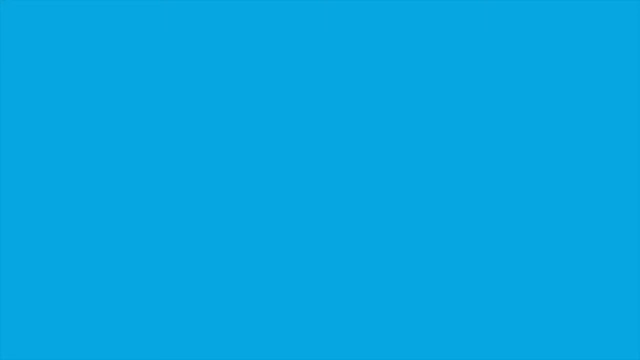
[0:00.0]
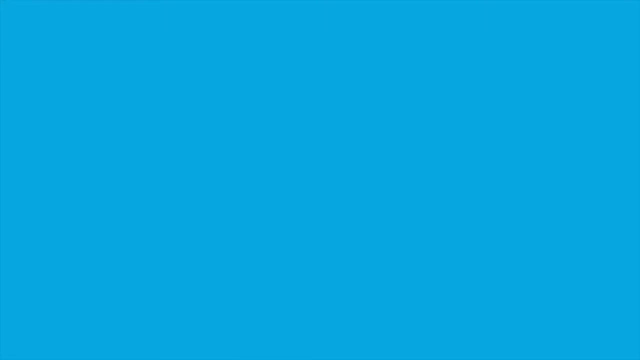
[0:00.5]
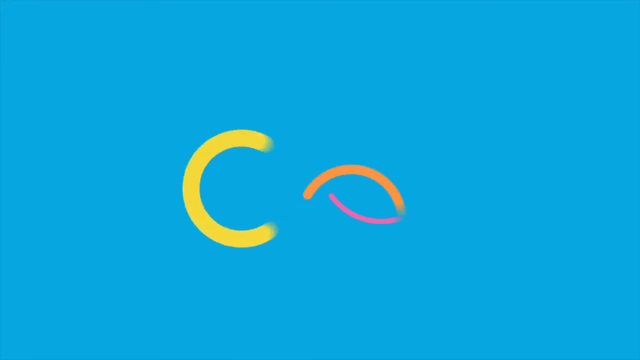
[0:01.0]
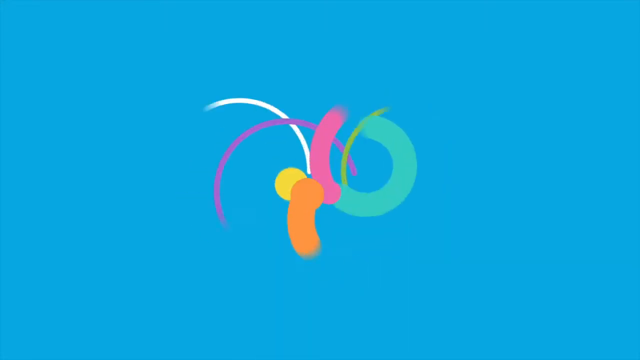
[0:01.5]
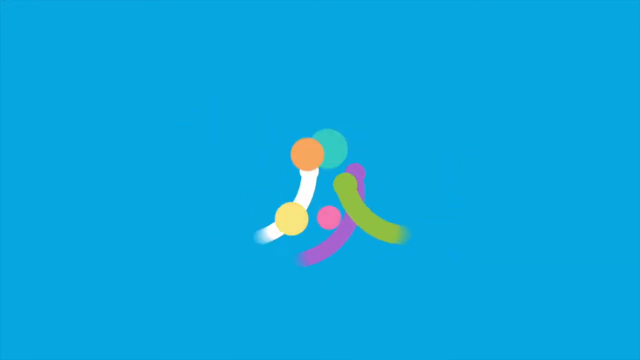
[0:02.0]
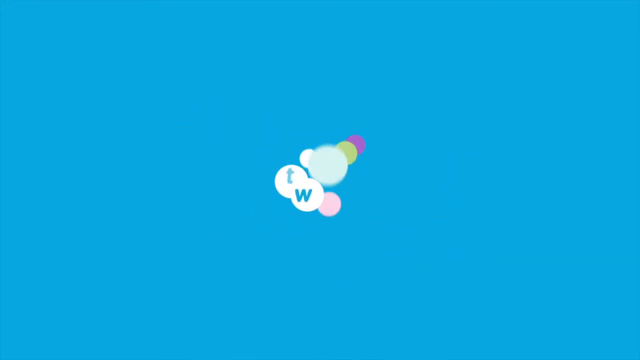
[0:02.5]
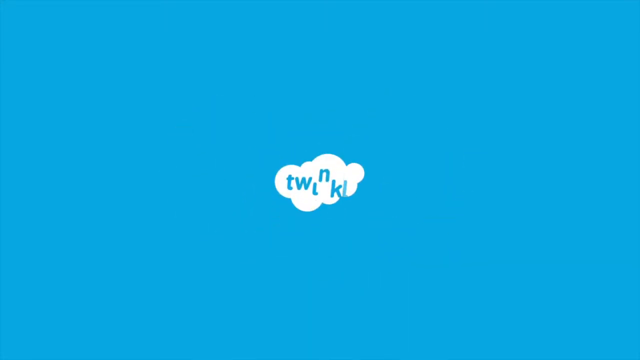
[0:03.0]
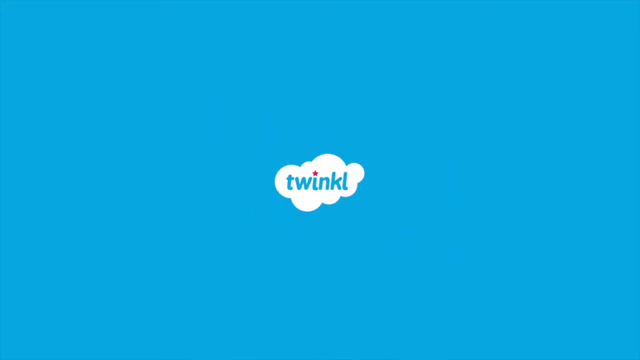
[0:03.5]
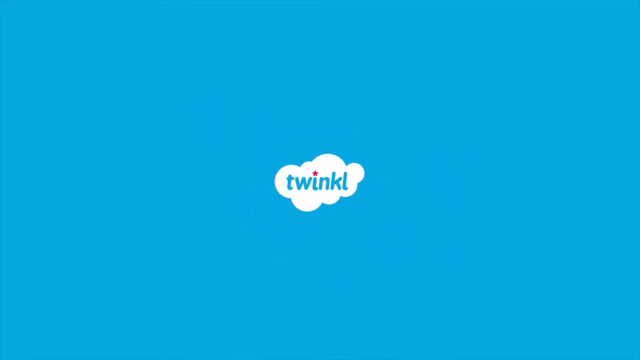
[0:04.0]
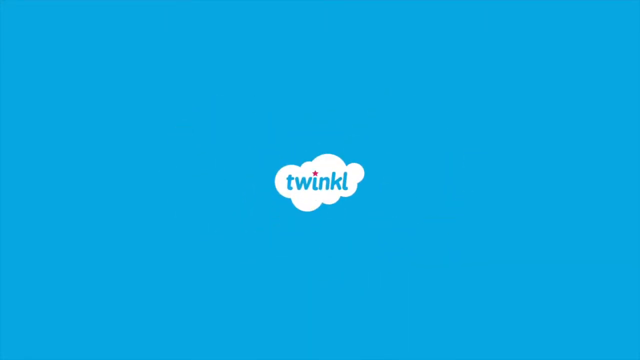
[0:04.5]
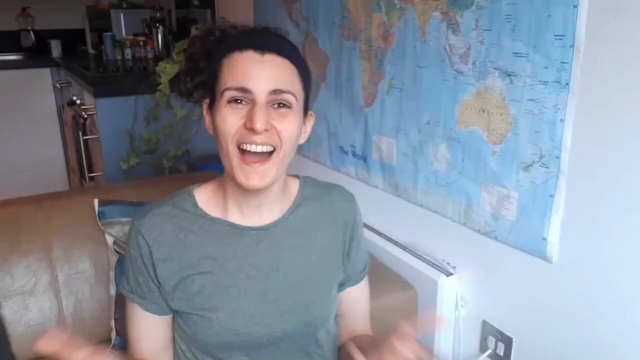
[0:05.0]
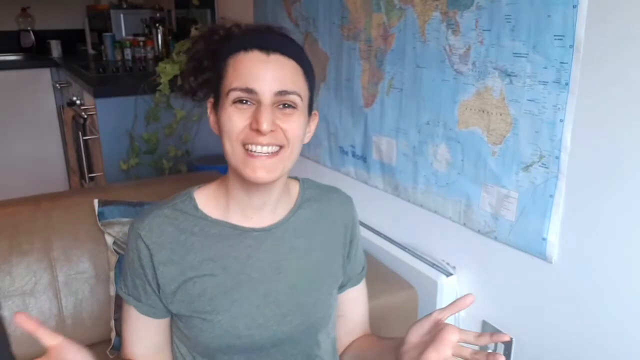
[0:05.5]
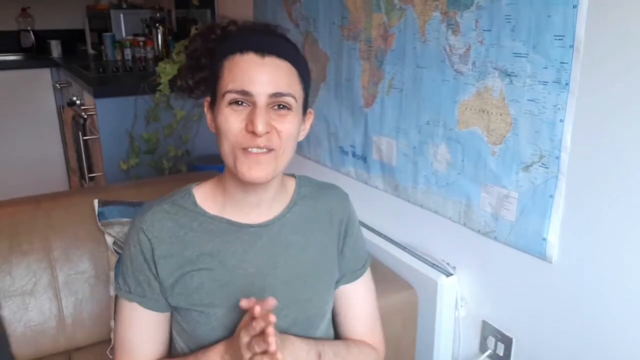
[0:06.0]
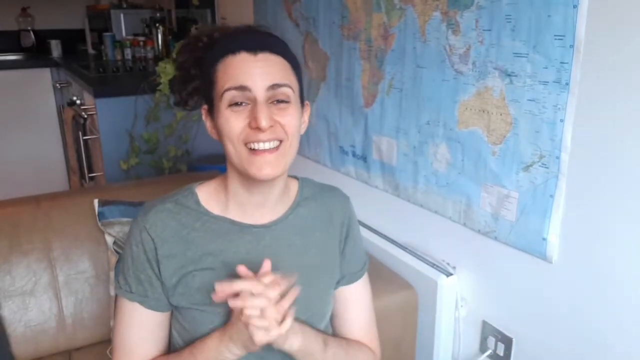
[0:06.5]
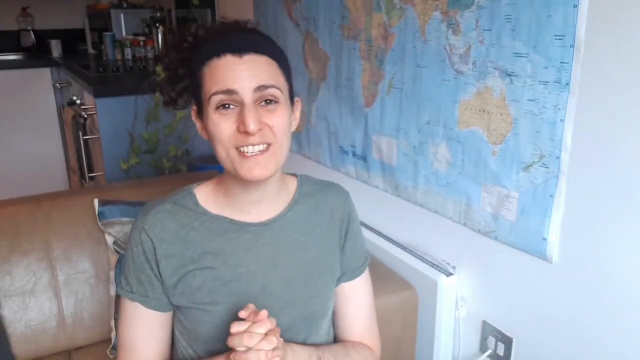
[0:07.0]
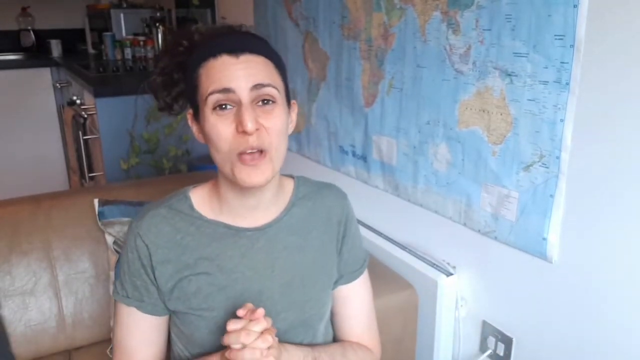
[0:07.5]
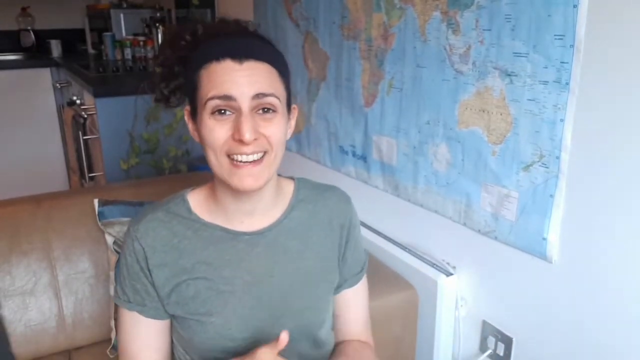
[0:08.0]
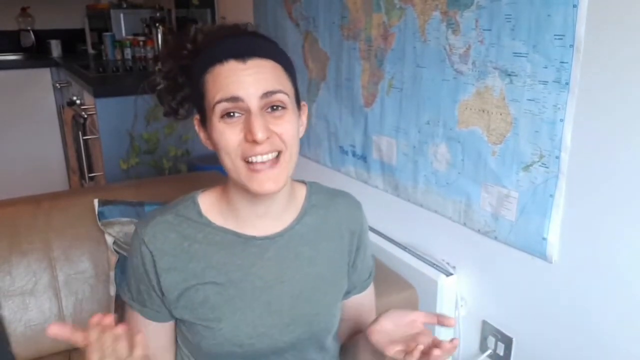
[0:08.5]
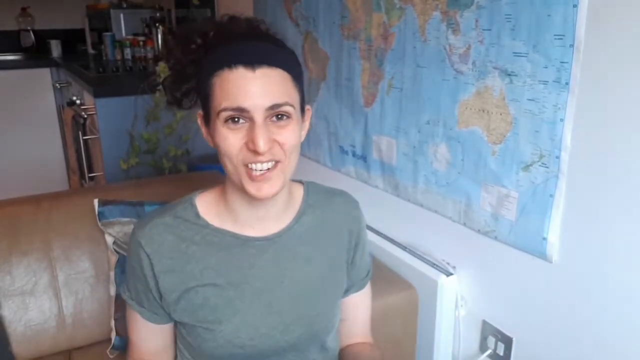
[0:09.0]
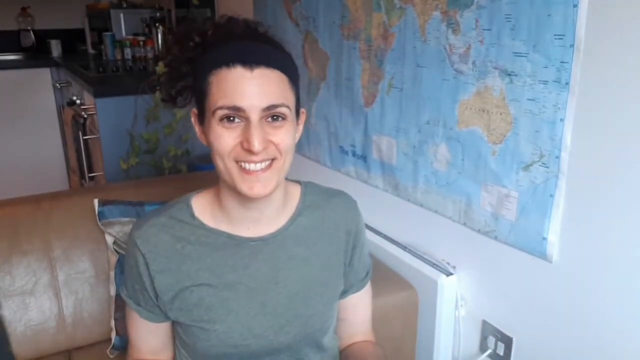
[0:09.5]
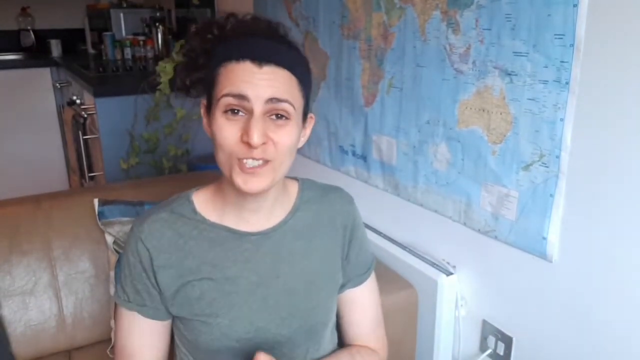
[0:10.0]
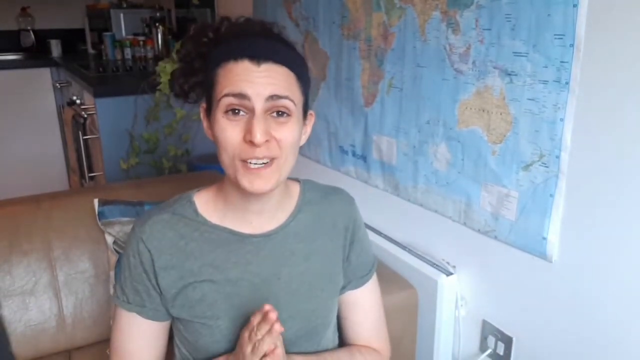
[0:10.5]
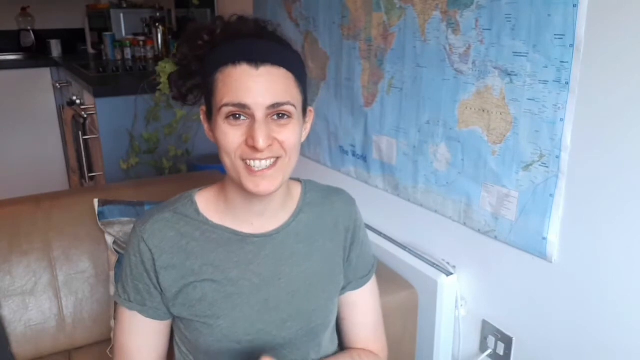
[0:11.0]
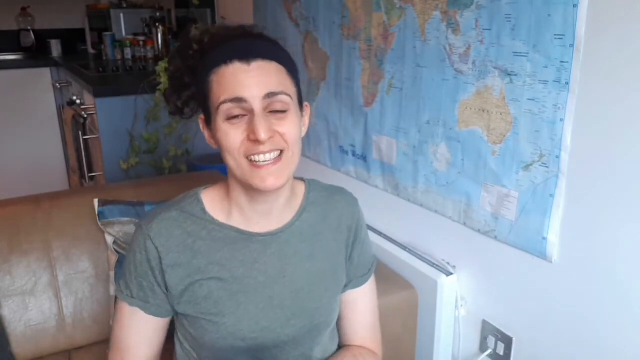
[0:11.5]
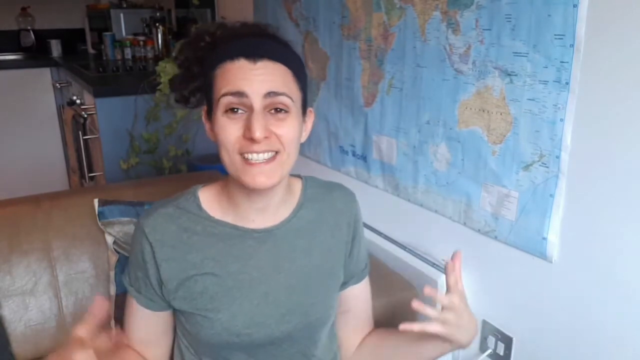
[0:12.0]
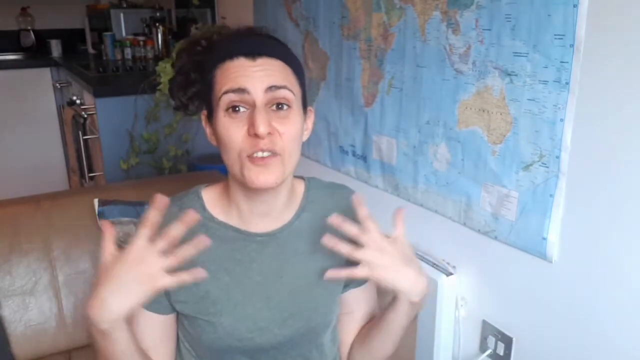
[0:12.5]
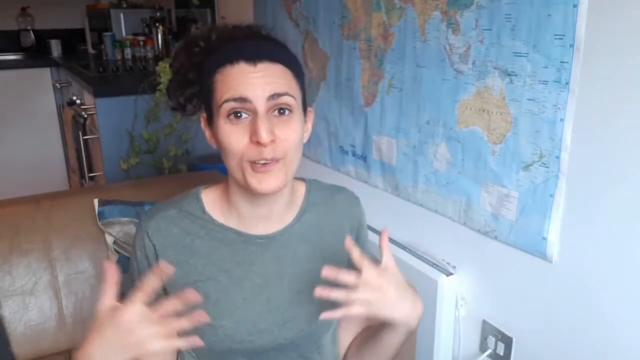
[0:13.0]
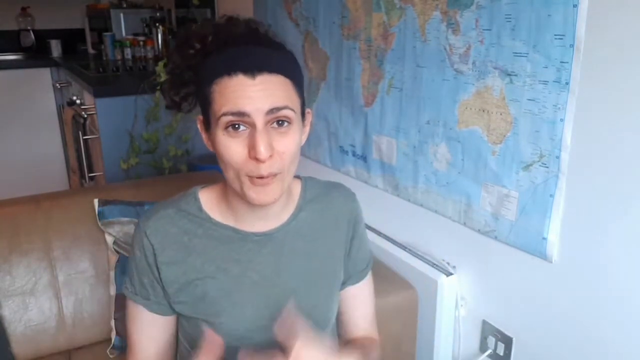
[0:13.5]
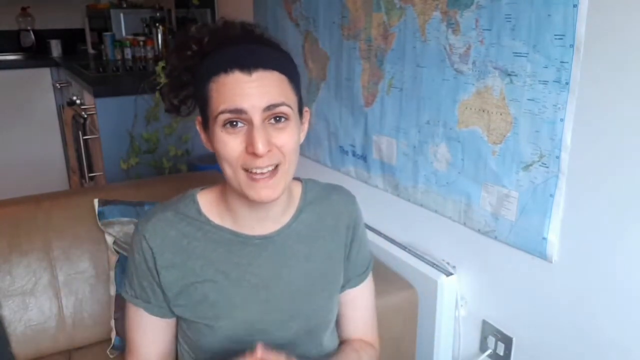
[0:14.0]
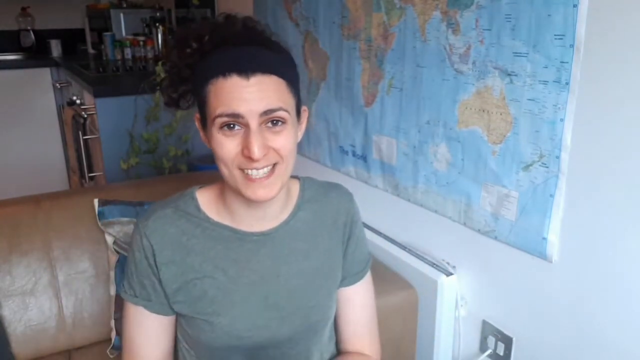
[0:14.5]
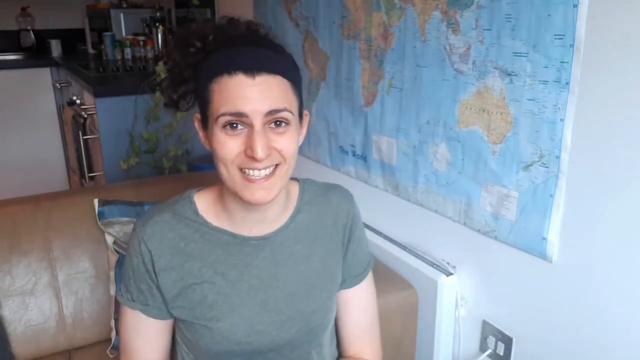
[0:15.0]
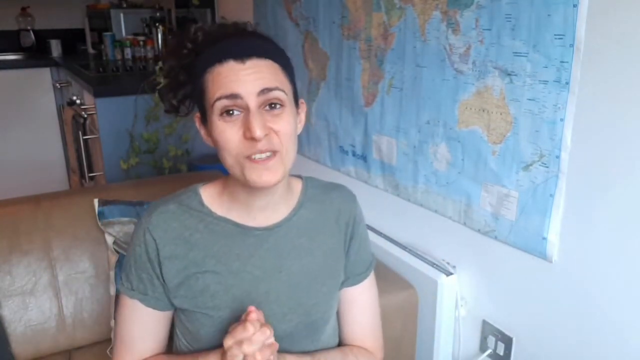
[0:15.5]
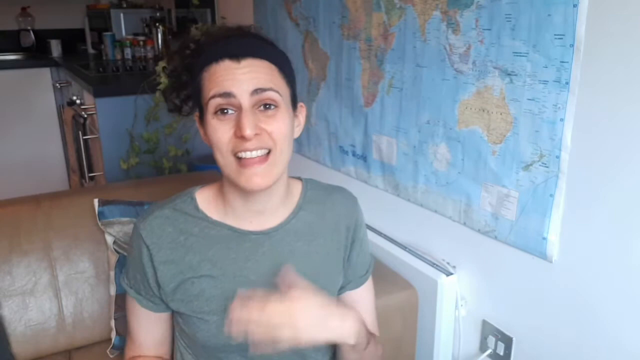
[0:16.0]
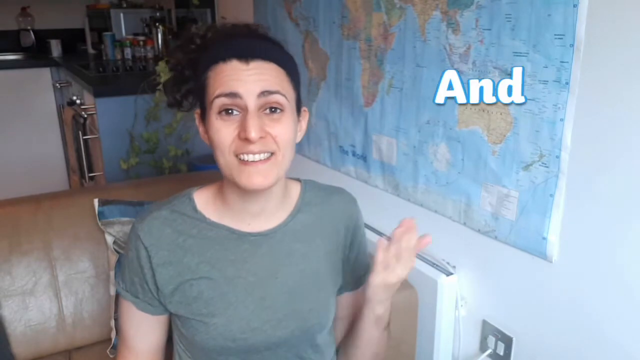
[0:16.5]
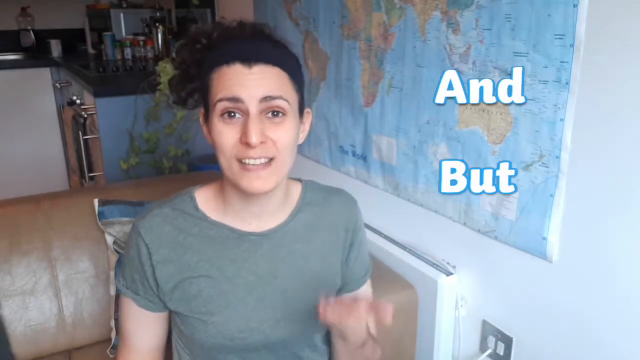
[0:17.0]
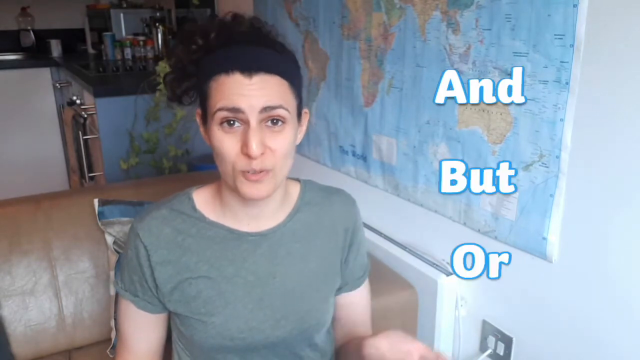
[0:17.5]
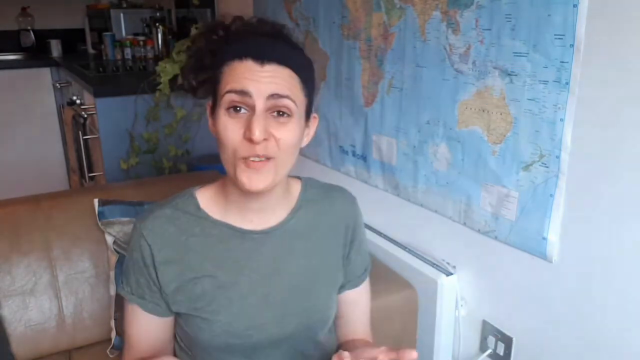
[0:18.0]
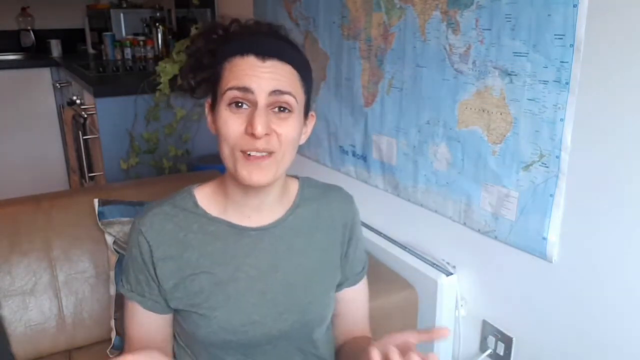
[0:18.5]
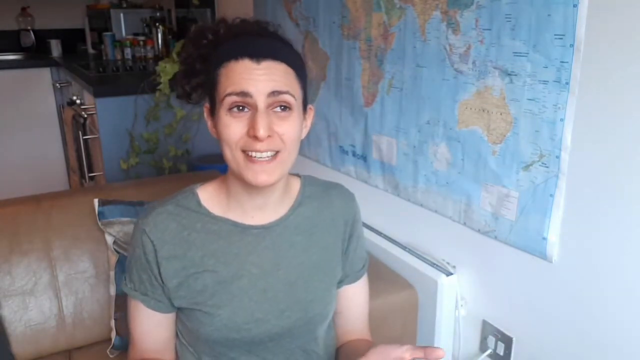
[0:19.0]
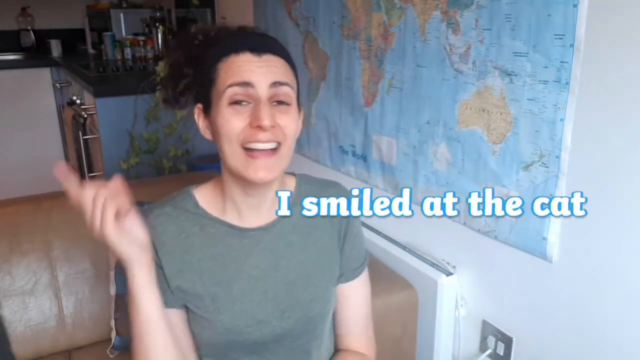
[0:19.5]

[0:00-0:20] A blue screen displays the word "Twinkle." Then a woman is sitting at a seat, apparently with a kitchen behind her, and a world map is hanging on the wall. She wears a dark green short-sleeved shirt, and her dark hair is kind of in a headband. She has dark eyes. She talks while looking at the camera, gesturing with her hands and smiling. She says "and," "but," "or," and "I smiled at the cat."